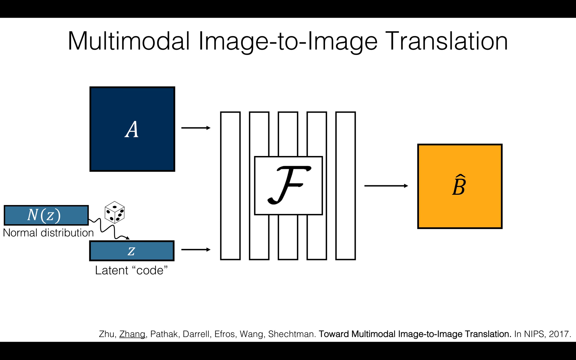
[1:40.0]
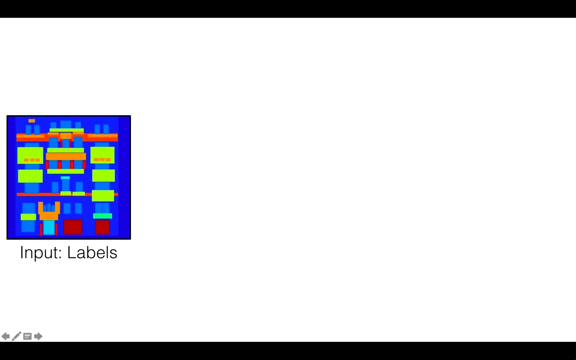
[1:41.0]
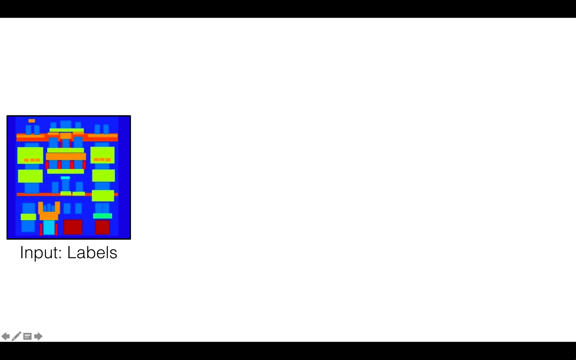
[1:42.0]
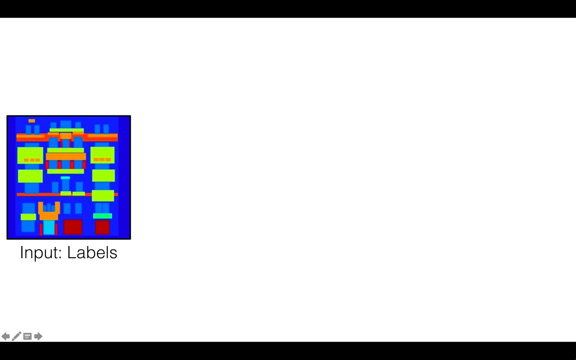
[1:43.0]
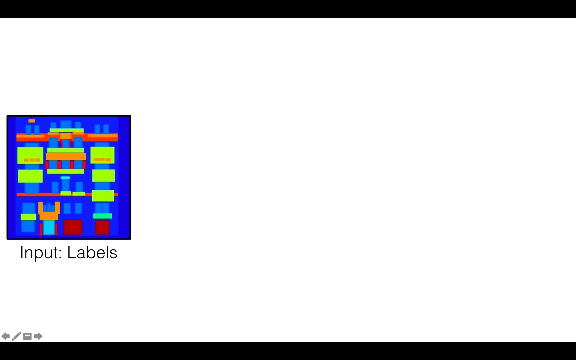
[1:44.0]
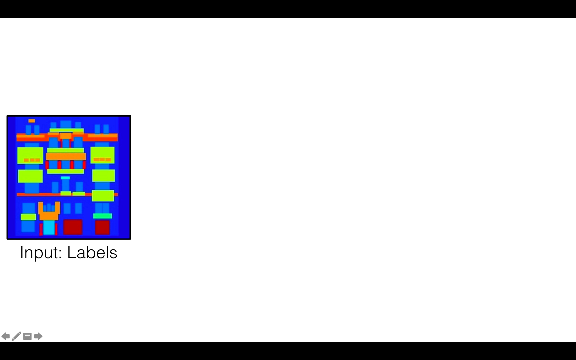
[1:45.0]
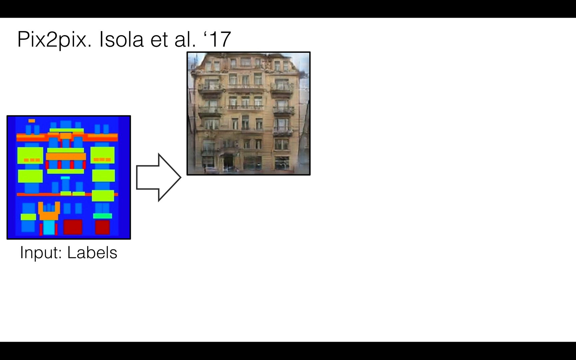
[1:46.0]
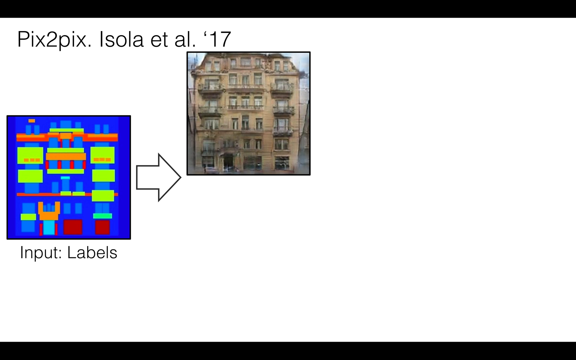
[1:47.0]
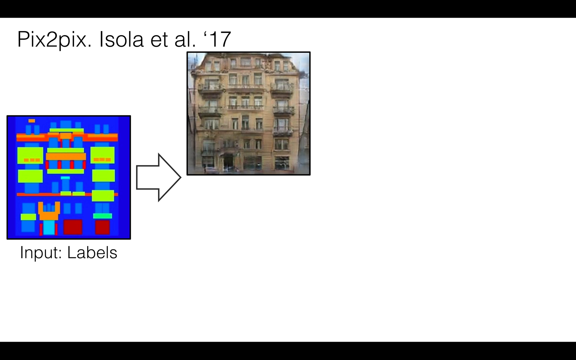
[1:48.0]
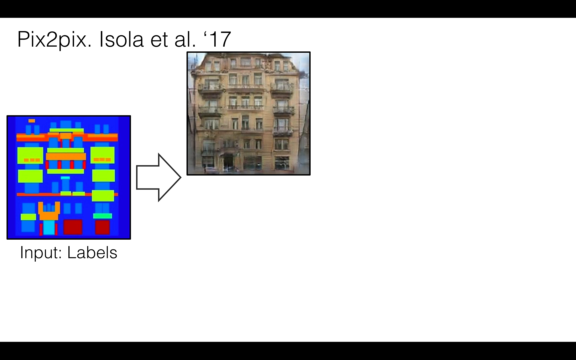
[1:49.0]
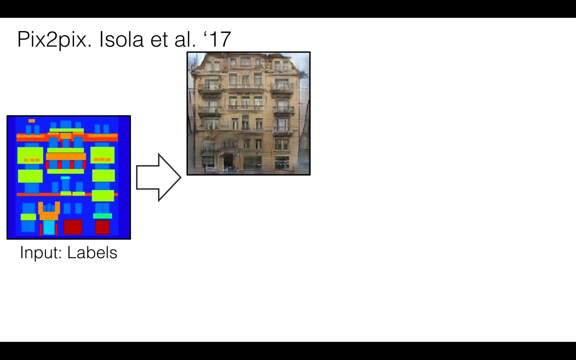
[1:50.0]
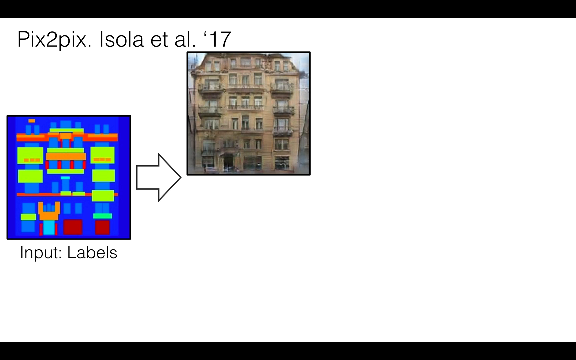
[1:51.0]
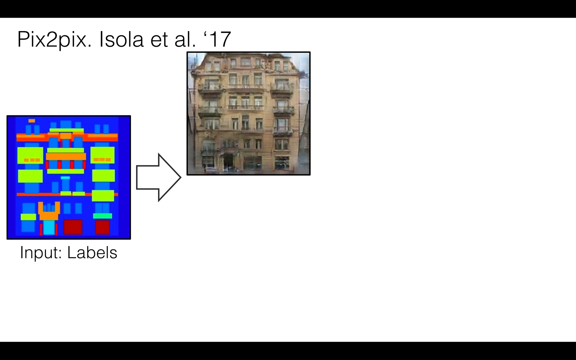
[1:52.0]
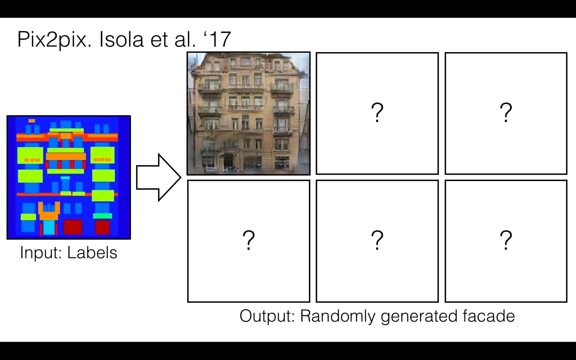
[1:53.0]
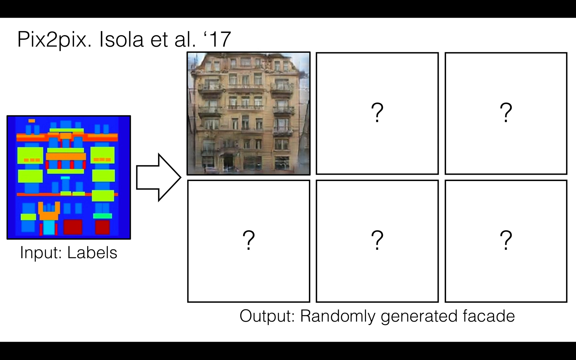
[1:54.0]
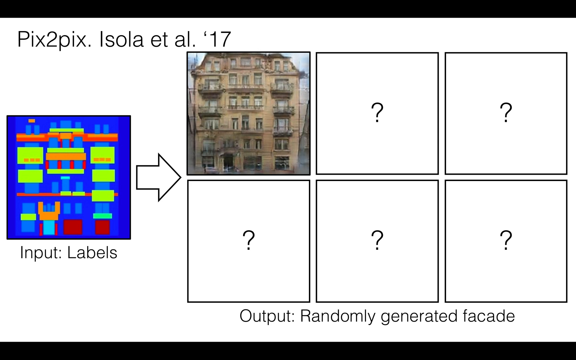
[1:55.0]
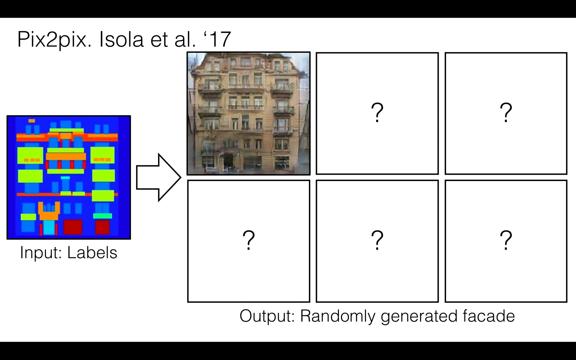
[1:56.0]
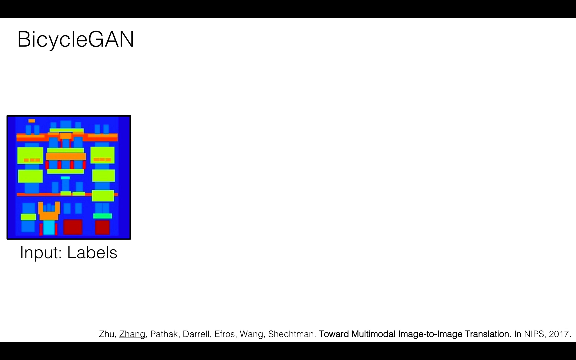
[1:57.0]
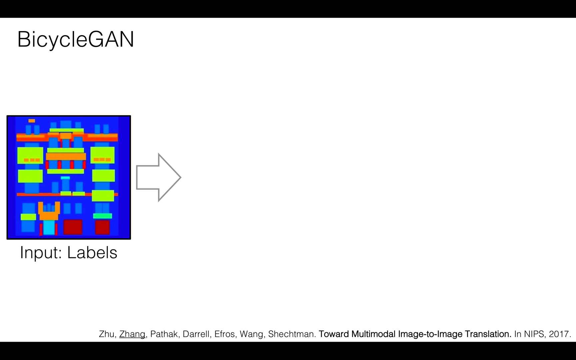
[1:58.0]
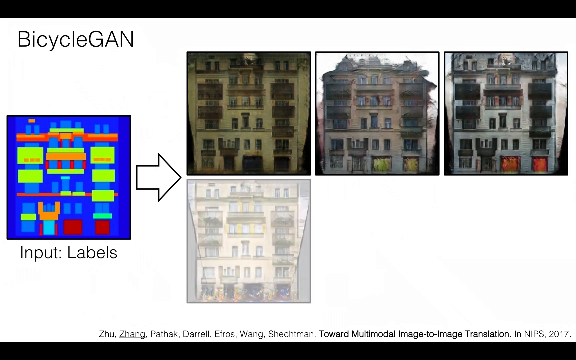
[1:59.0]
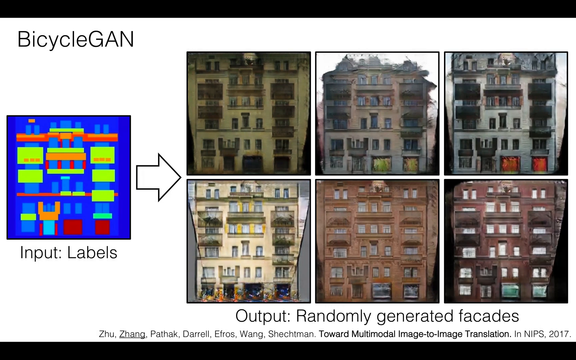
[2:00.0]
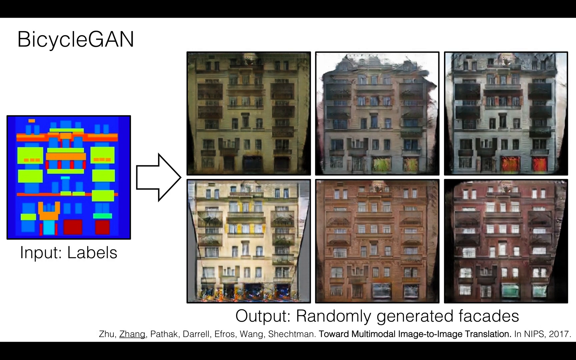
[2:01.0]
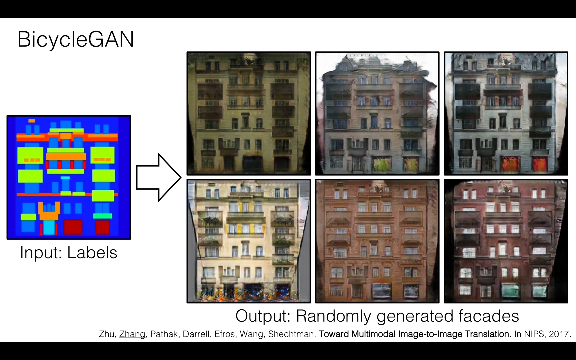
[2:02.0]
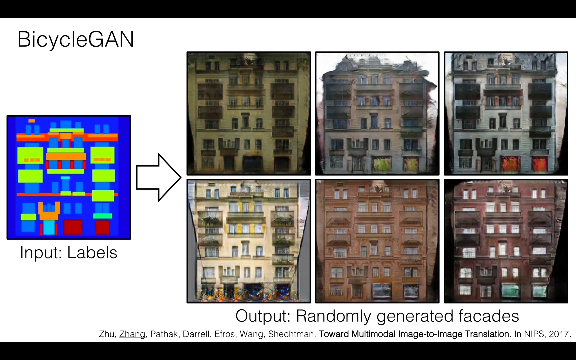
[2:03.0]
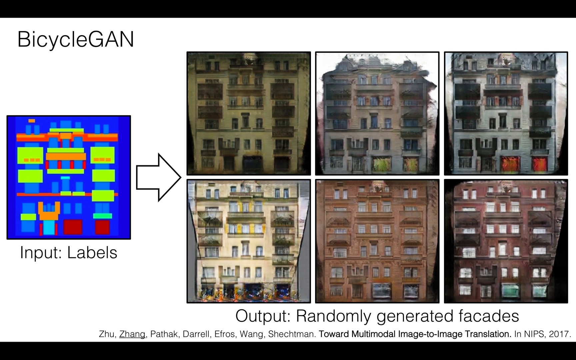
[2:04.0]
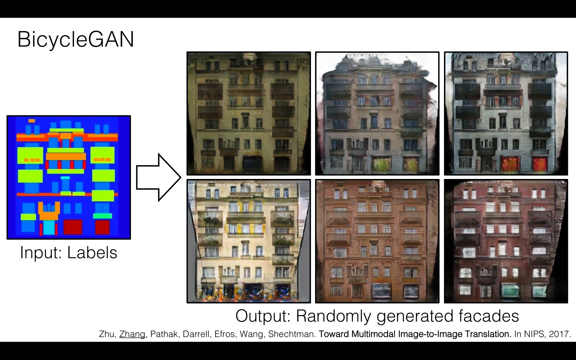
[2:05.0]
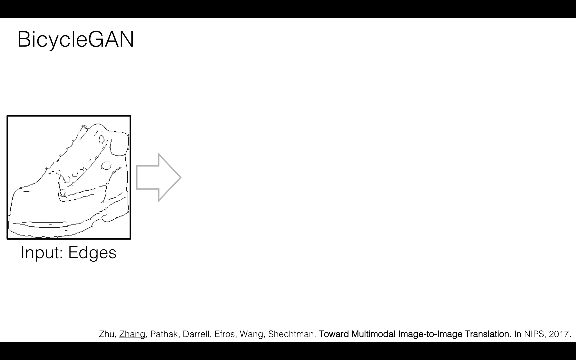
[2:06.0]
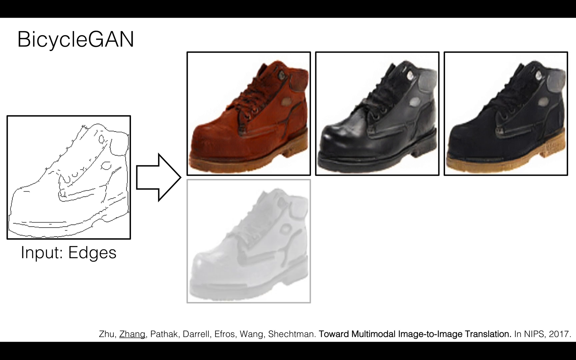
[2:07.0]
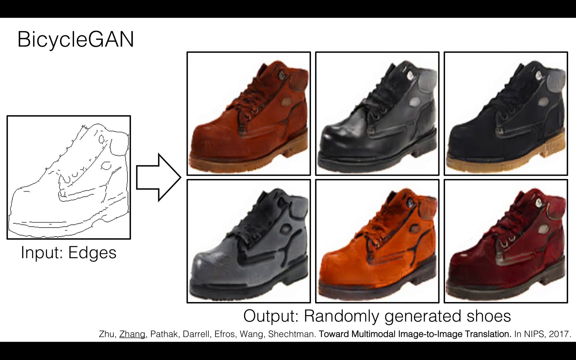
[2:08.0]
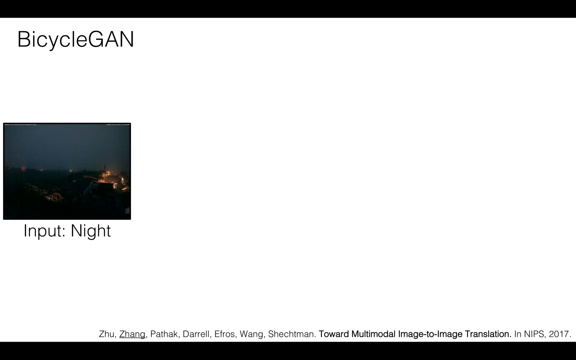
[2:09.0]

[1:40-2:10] On a white background, black text at the top middle reads "multimodal image to image translation." In the middle are five vertical rectangular shapes with a letter F in a square box at their center. On the left are two rectangular shapes: the left one reads "normal distribution" with the letters N and z inside, and the one to its right shows the letter z with "latent code" underneath. A small dice icon is between them. Above that, a box with the letter A points toward the middle rectangles. On the far right is a box with the letter B on an orange background. The scene then changes to a box with "input labels" at its bottom and an arrow pointing right to a box with an image of the front of a building. Five empty boxes with question marks follow, and text beginning "output randomly generated" is underneath all six boxes on the right. The boxes disappear and more images of building fronts appear, this time in different colors.